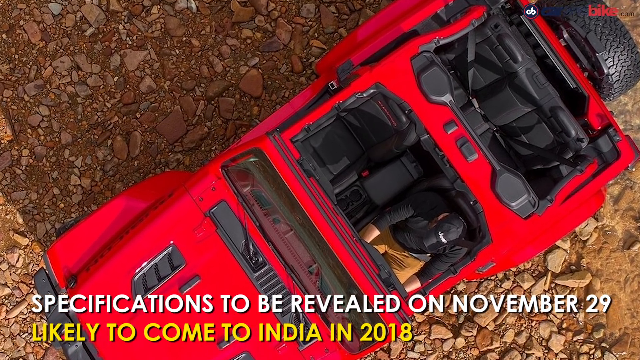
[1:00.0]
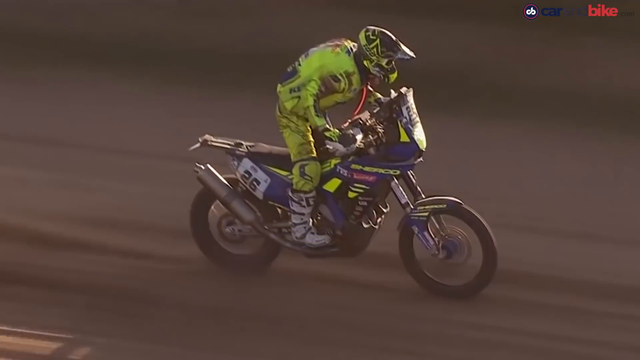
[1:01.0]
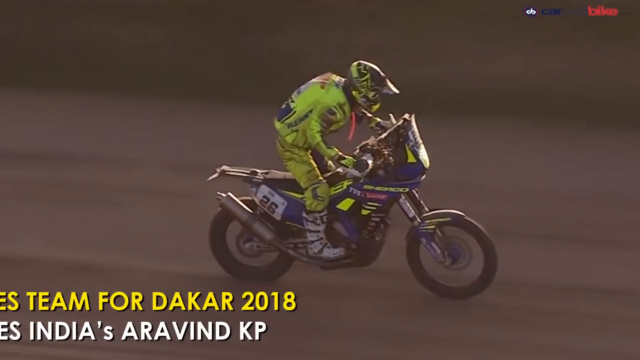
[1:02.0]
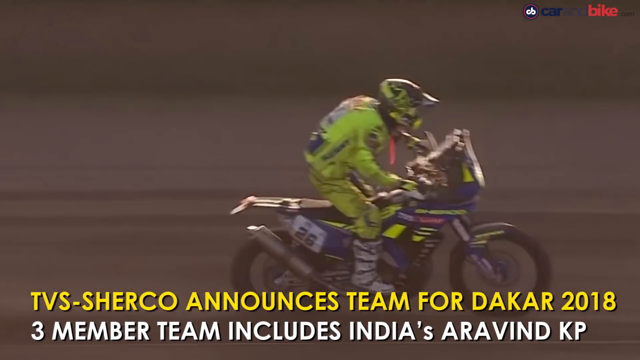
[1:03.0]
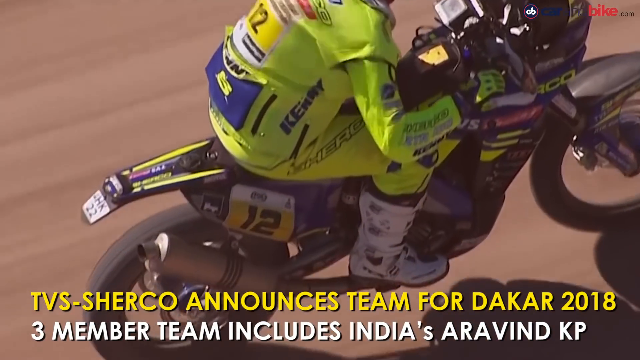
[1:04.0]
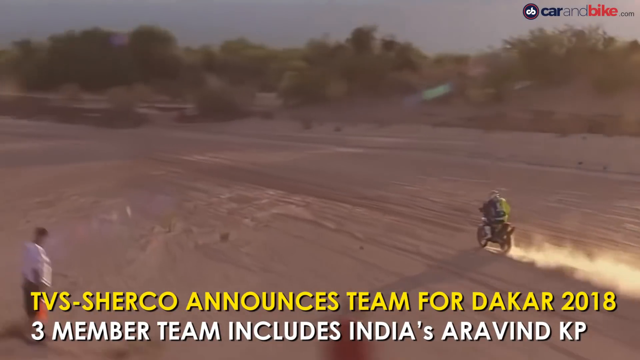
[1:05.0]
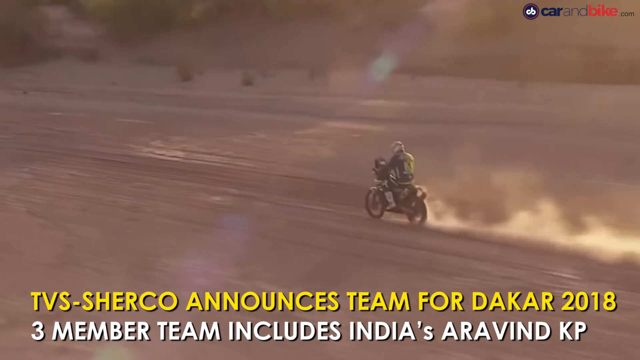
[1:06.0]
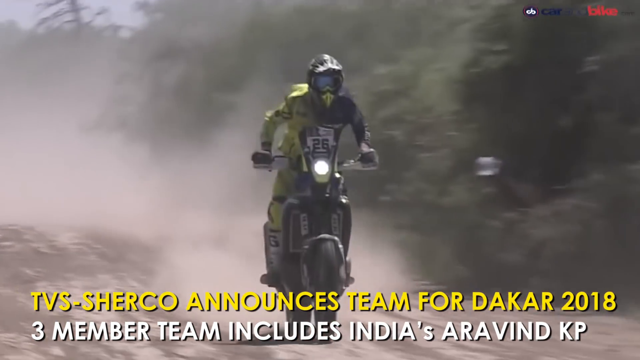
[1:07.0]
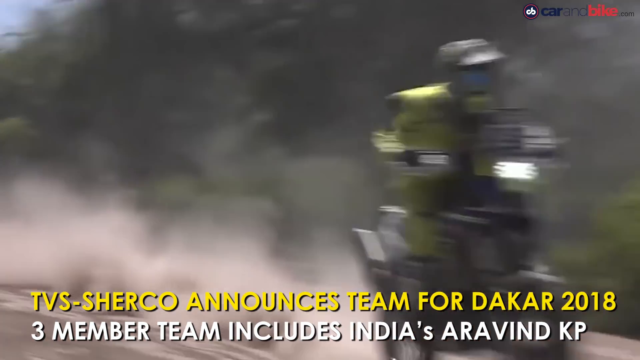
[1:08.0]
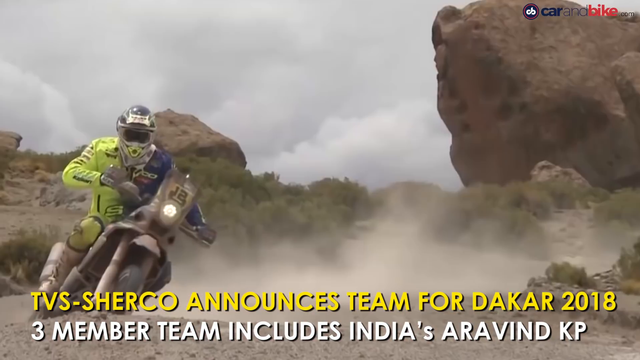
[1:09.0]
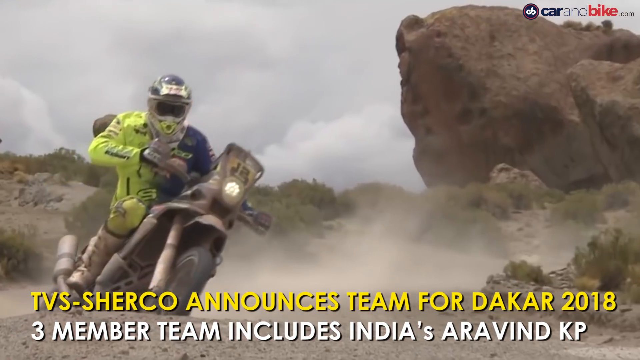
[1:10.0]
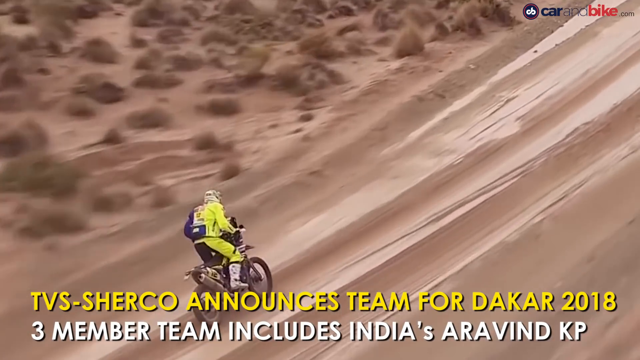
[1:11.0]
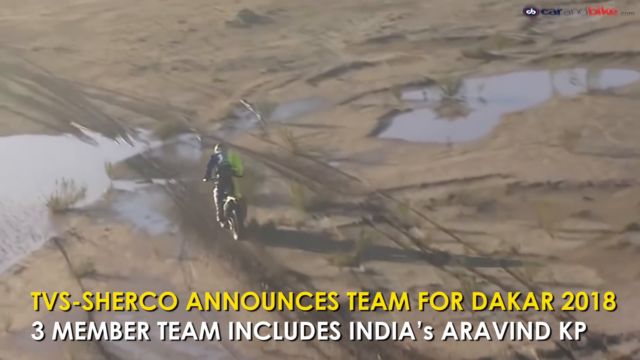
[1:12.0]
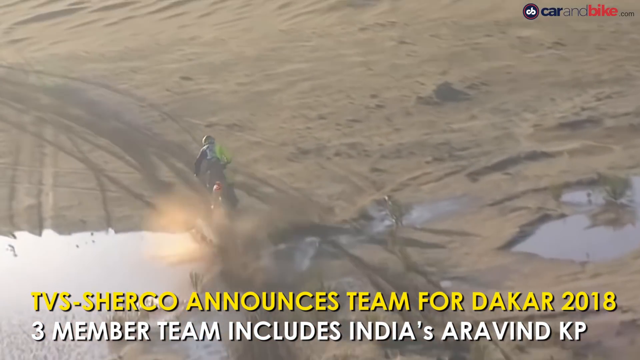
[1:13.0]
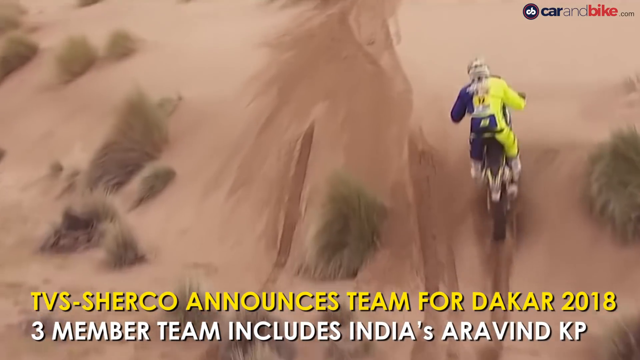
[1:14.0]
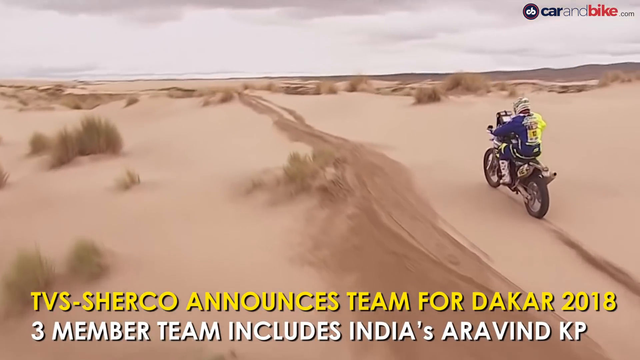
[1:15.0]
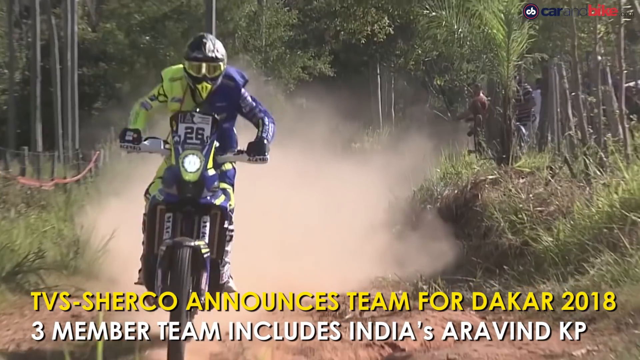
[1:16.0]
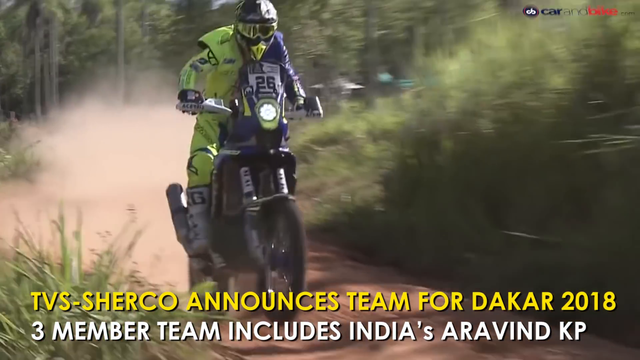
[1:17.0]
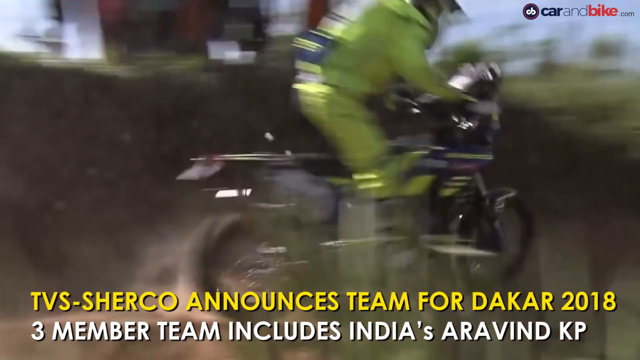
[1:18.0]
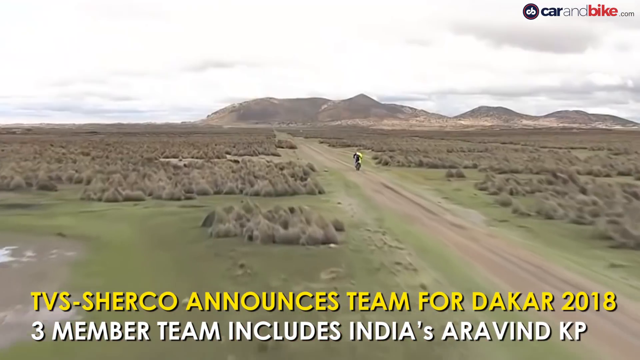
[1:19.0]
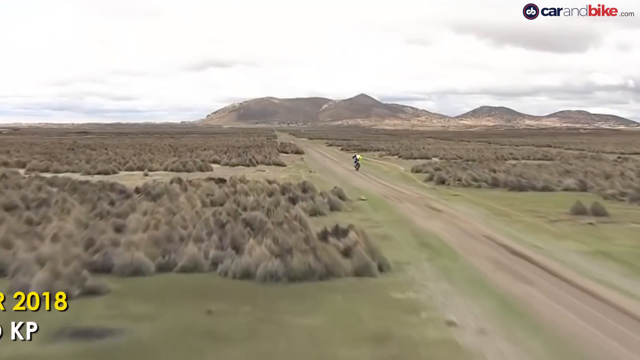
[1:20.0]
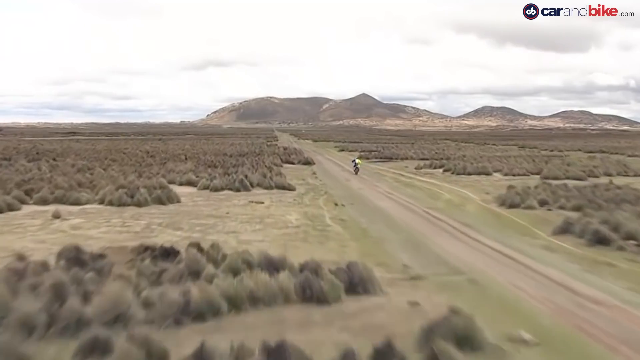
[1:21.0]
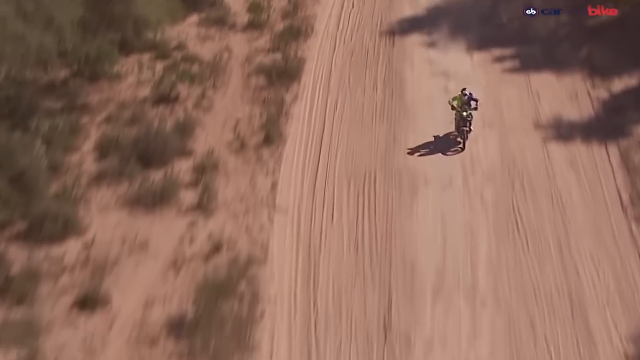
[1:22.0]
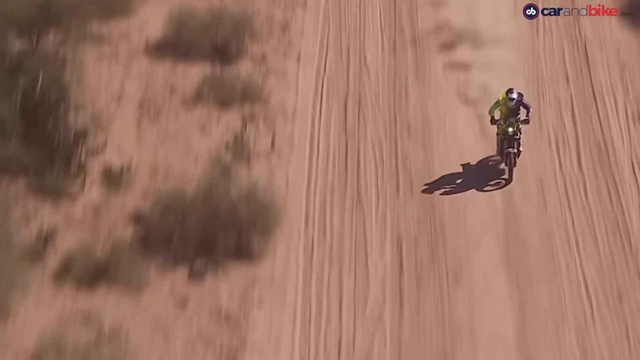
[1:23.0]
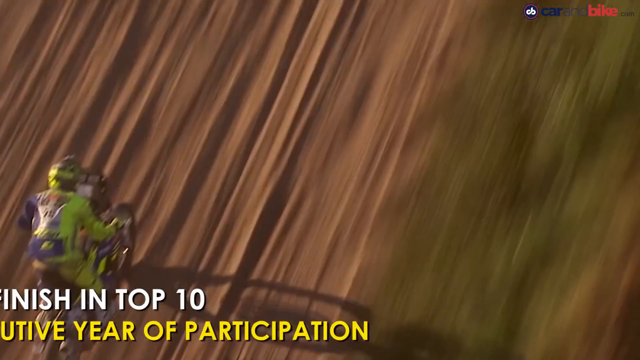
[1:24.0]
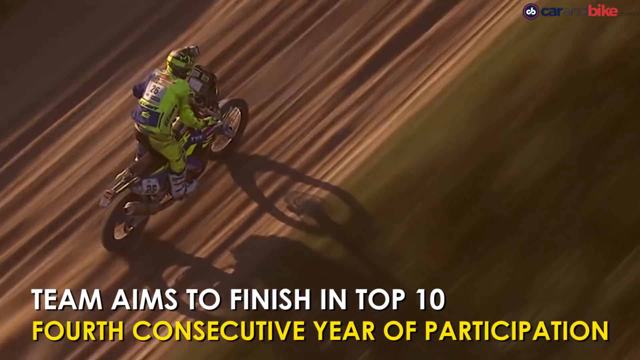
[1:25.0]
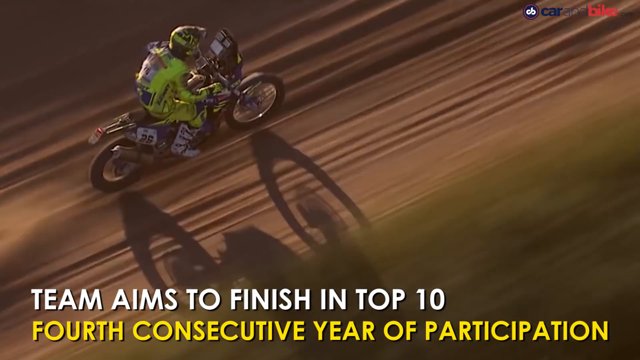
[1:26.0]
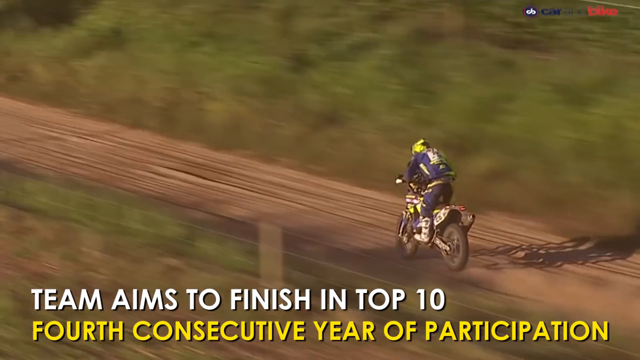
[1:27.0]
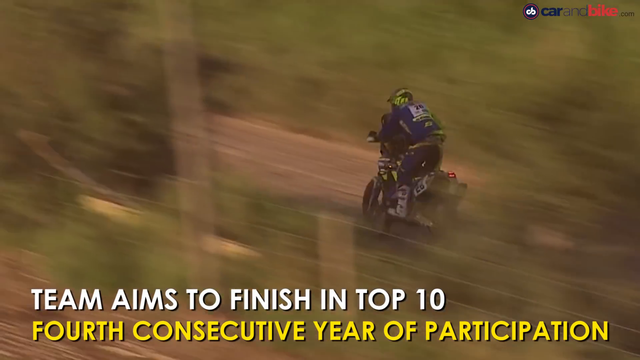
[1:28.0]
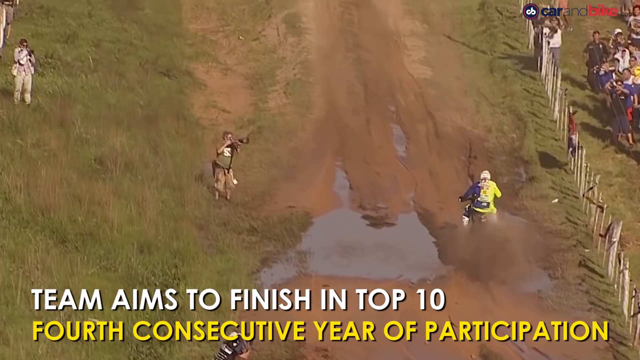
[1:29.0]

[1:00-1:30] The next subject is a promotion or announcement about the 2018 Dakar Rally. Footage from the Dakar Rally shows endurance motorcycles going through the desert, filmed from a helicopter, along with a few passbys. The dramatic, professional race footage is presumably from past events. Added text at the bottom says the team is aiming to finish high and that this team, presumably from India, has taken part in the Dakar Rally in consecutive years. A rider is shown going through the desert, racing and competing.